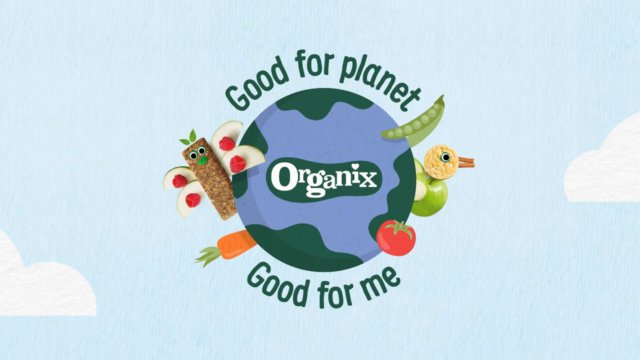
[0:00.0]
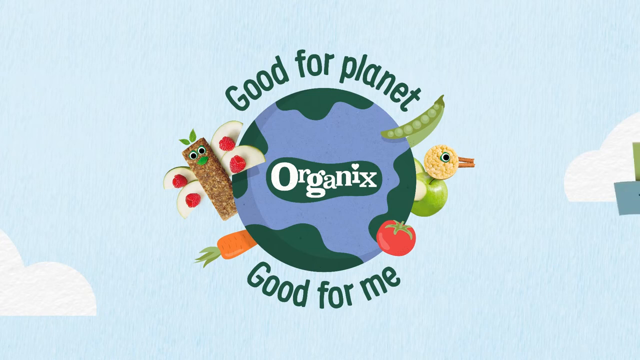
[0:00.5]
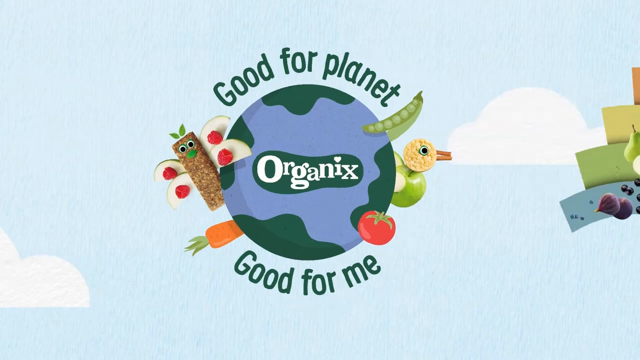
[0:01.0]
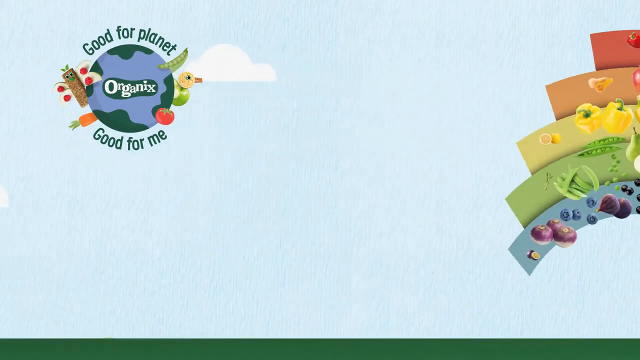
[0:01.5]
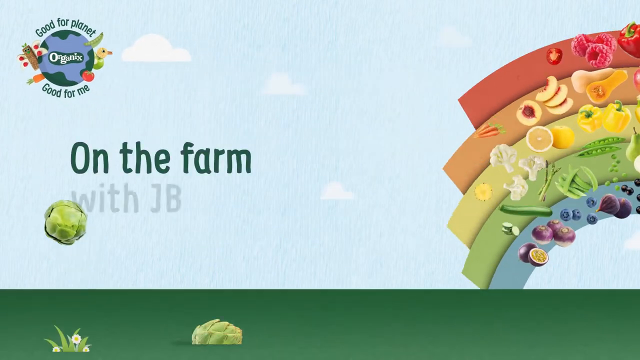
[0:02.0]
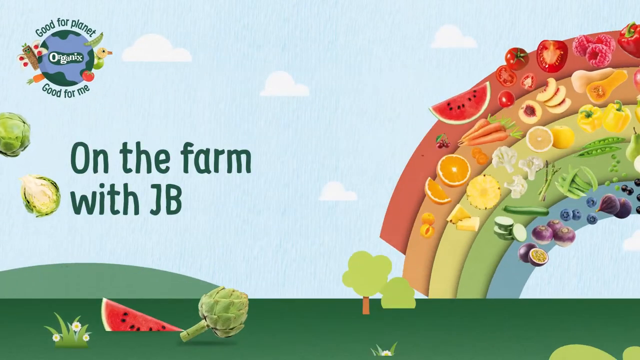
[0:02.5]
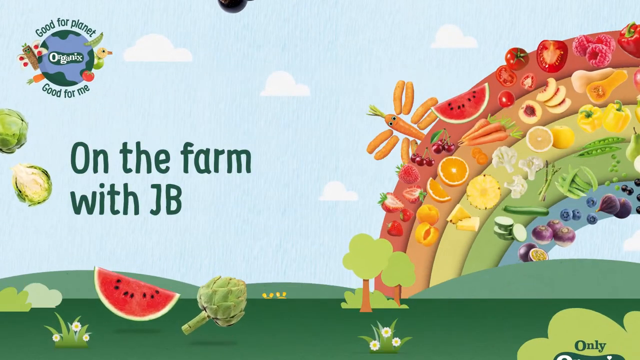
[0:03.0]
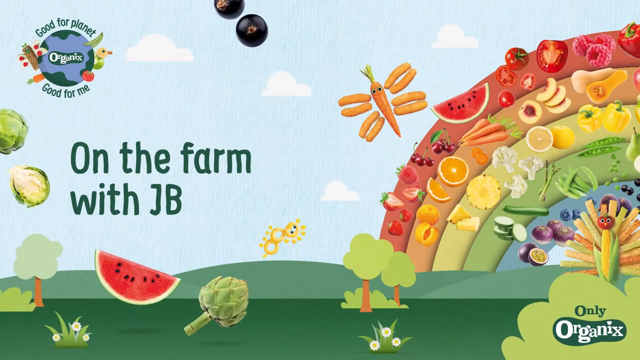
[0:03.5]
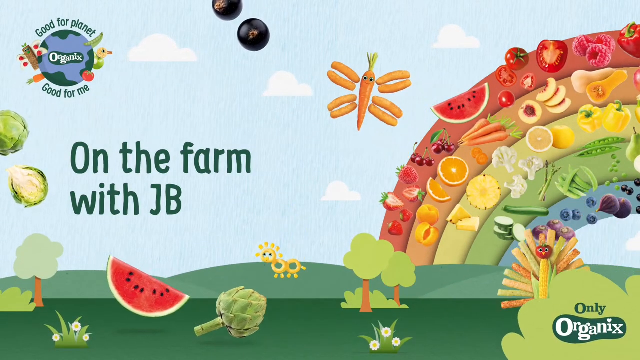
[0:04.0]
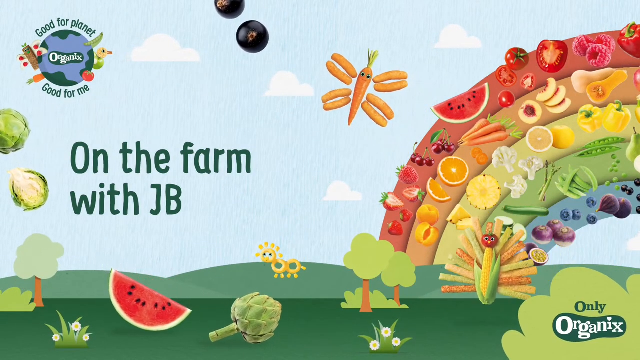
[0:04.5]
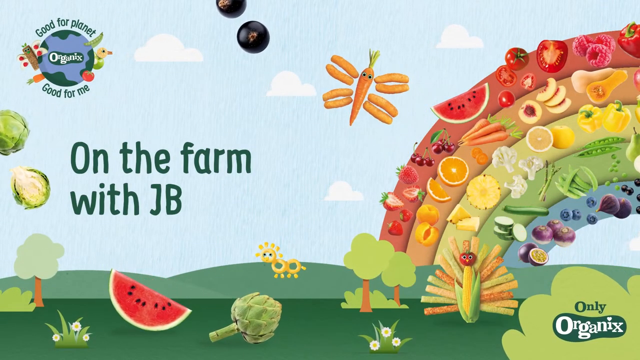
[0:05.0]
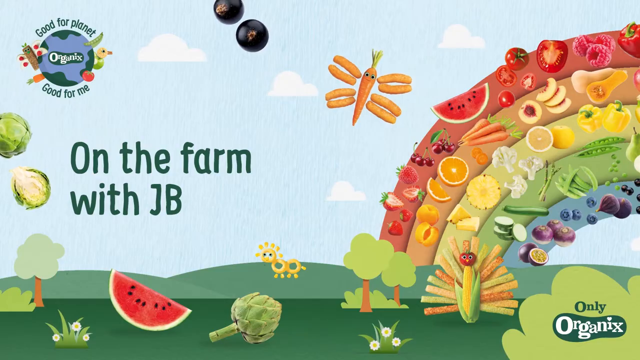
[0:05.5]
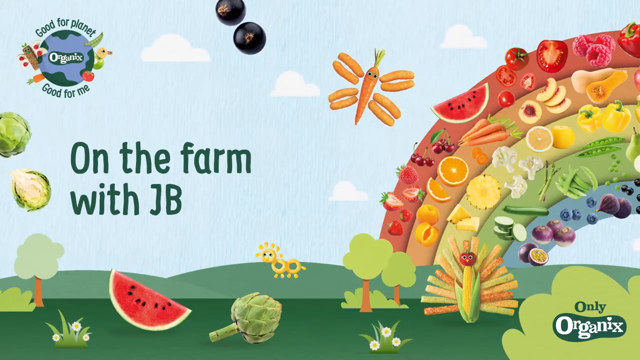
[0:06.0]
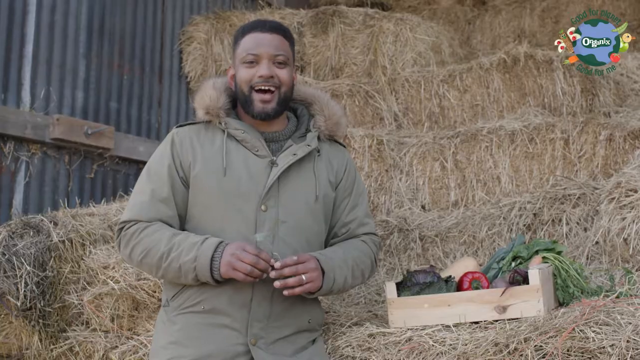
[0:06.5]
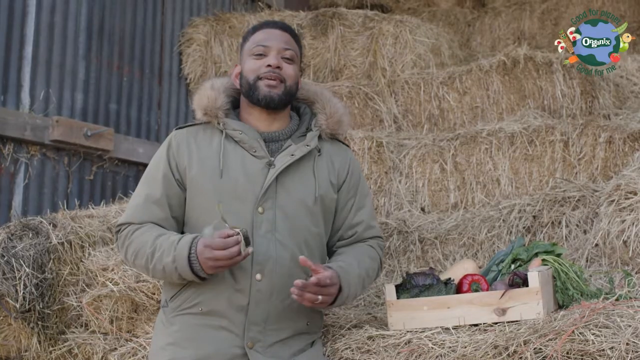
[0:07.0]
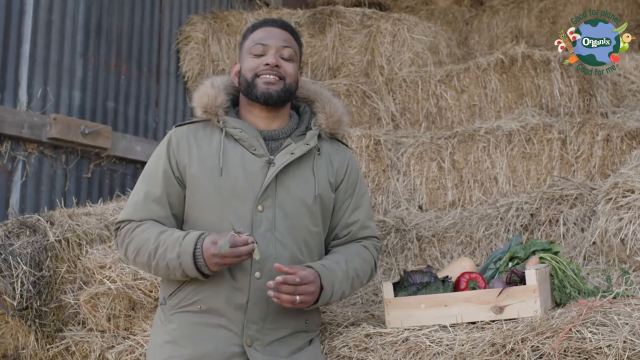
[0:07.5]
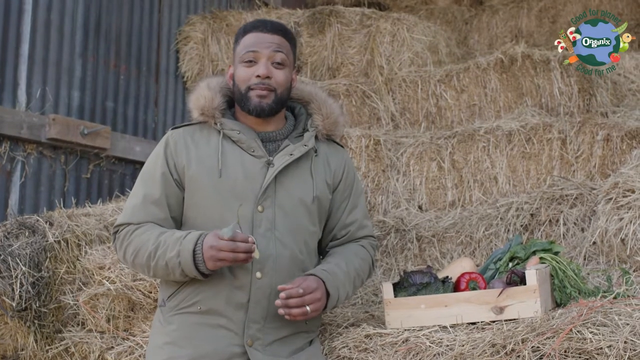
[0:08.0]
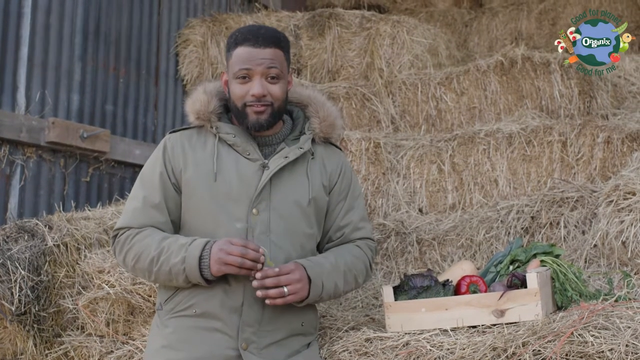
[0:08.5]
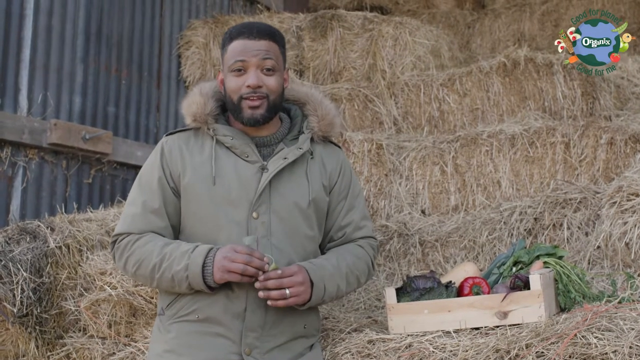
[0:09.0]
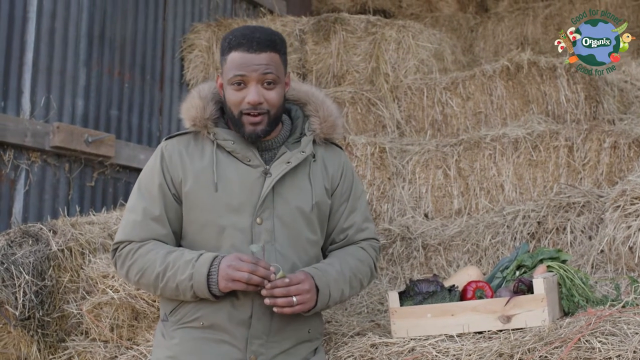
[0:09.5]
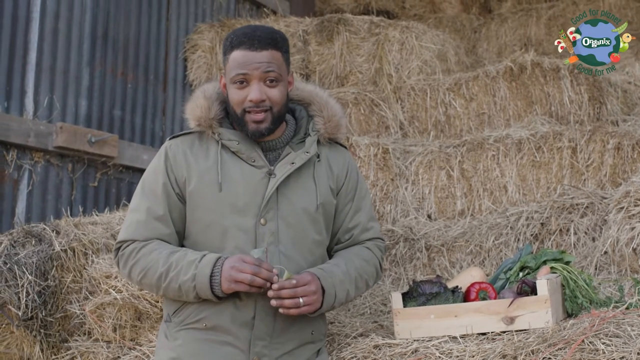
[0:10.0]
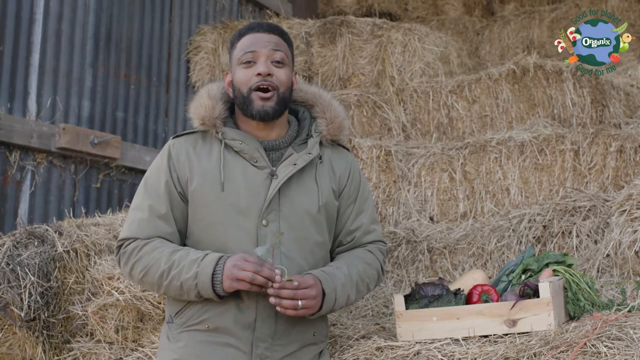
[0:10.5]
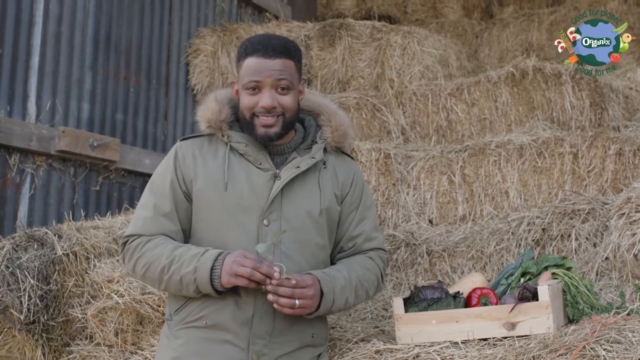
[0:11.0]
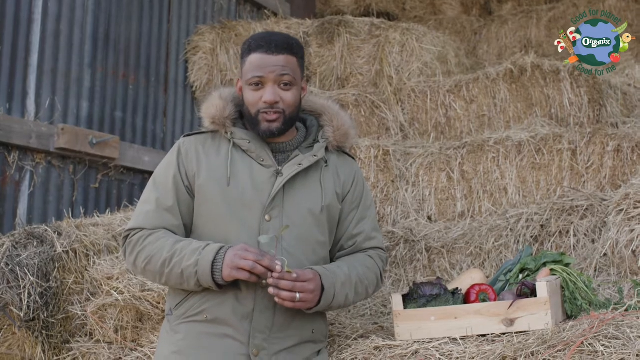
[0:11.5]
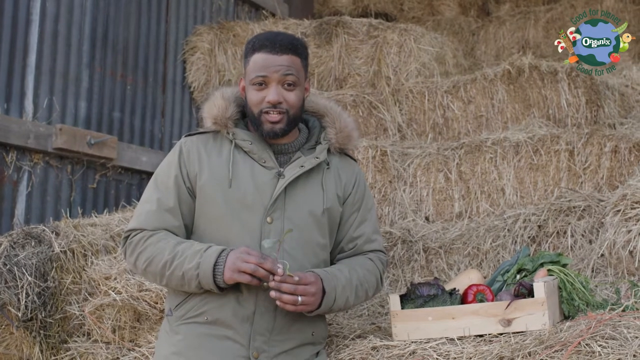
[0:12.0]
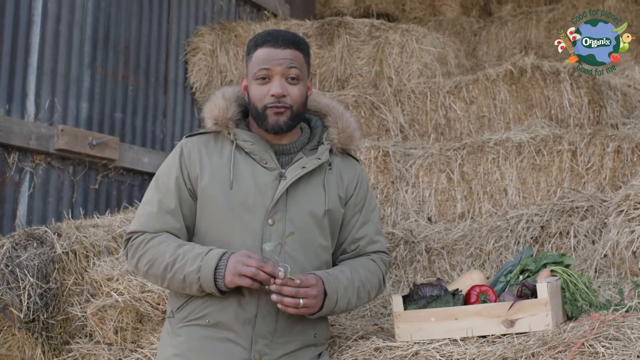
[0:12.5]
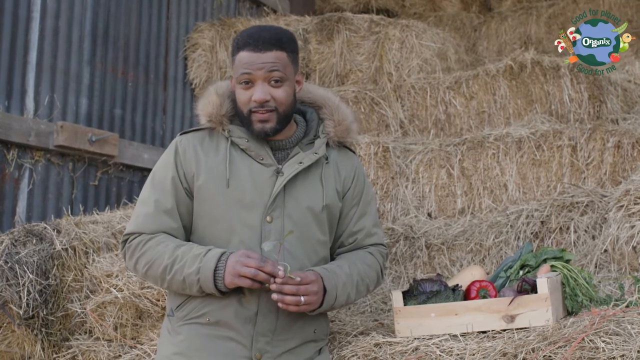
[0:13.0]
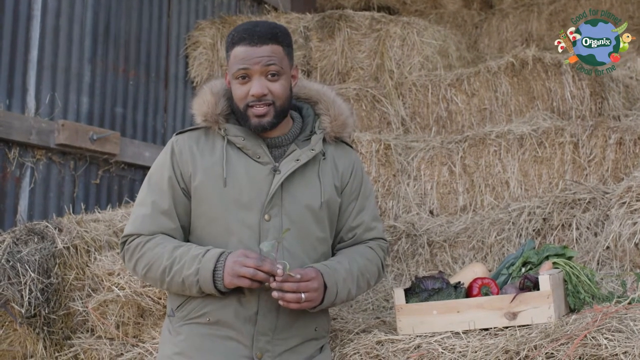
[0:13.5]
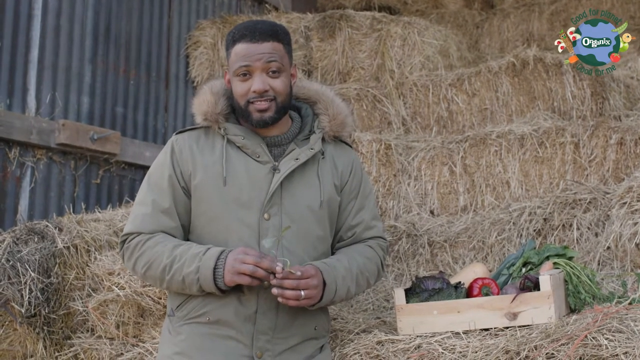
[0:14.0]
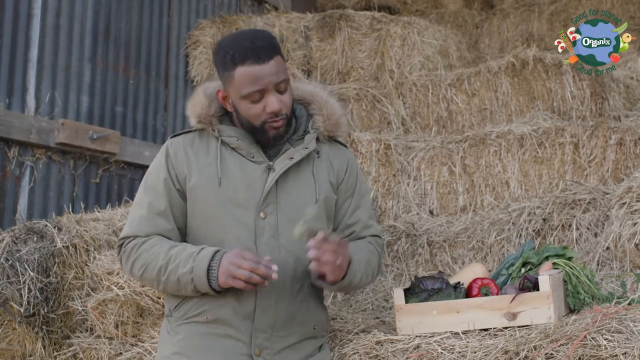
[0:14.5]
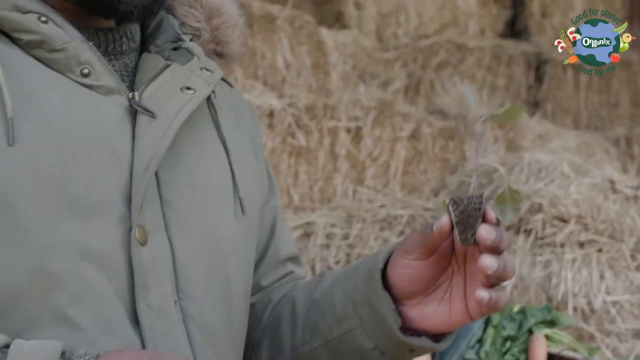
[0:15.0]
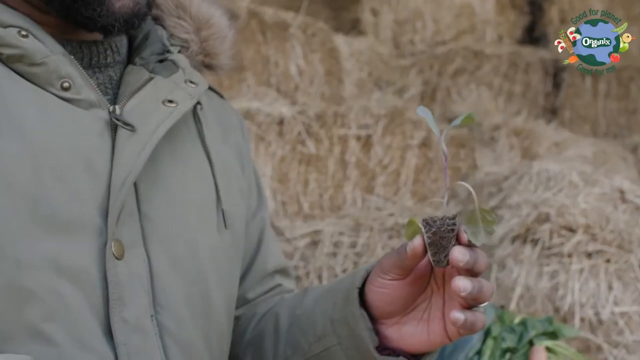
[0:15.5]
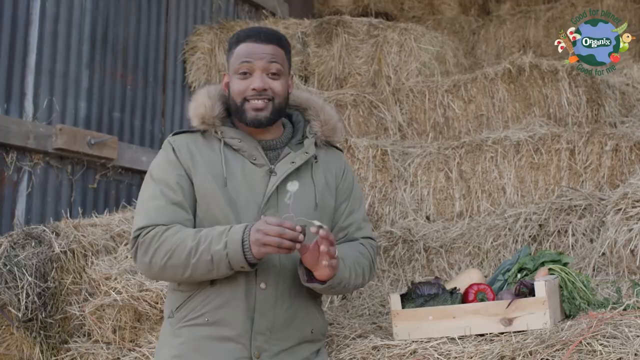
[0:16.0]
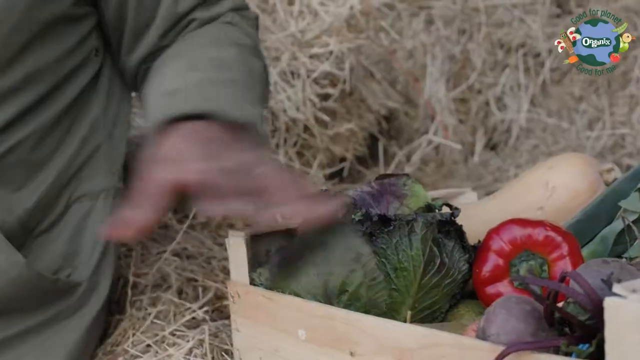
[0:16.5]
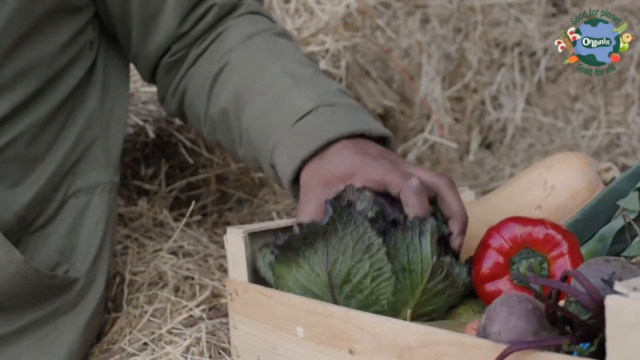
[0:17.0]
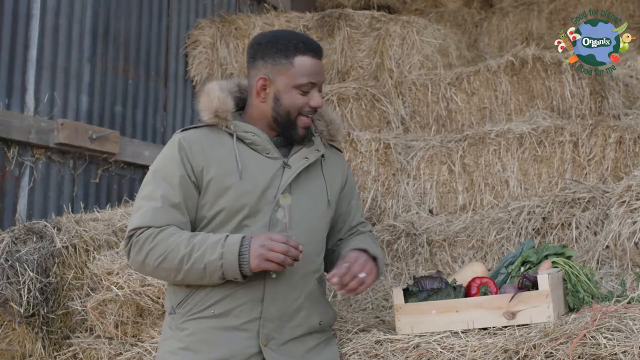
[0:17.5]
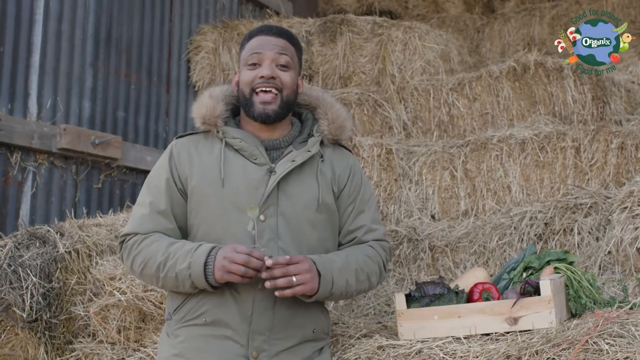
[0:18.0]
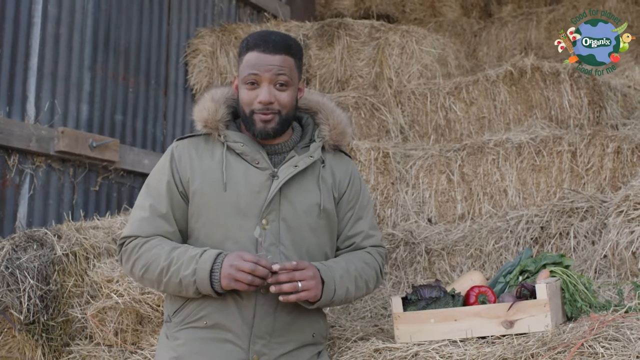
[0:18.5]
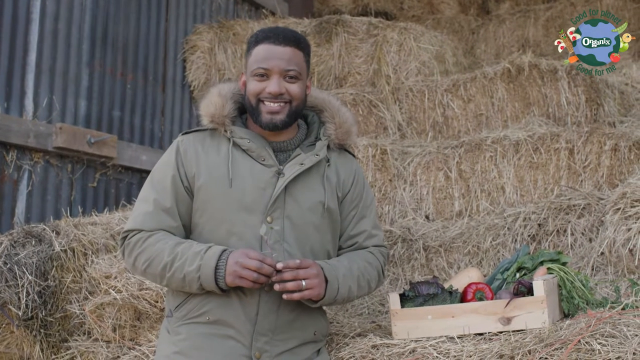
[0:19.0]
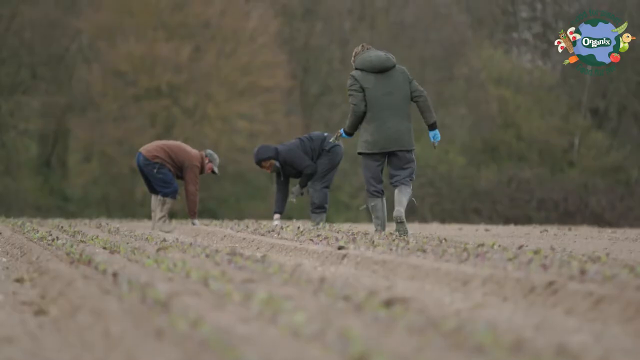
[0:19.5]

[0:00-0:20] The video opens on a colourful background with a lot of fruit. A banner reads "good for the planet", and there is a picture of the earth with fruit decorating around it. A caption reads "on the farm with JB", also on a very colourful setting. A man, presumably JB, then talks directly to the camera, looking very positive. He holds up a small plant and then shows some lettuce. A short shot of a few seconds follows, showing three other people working on the plot. They all look middle-aged, no females are visible, and no animals are seen.